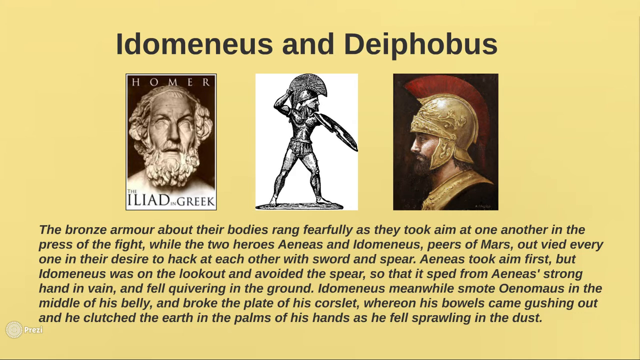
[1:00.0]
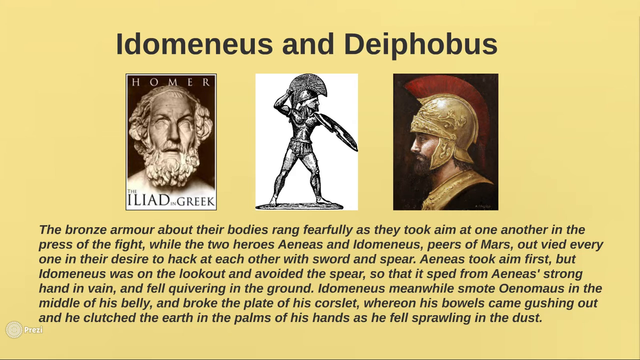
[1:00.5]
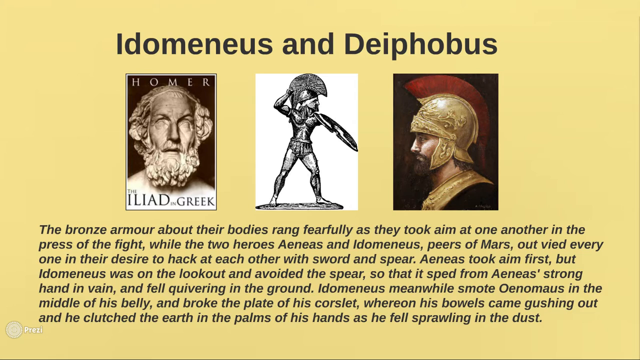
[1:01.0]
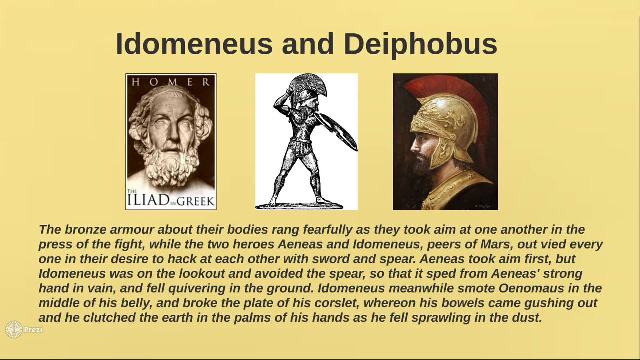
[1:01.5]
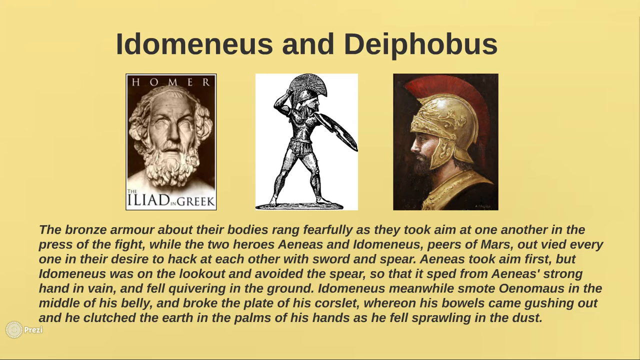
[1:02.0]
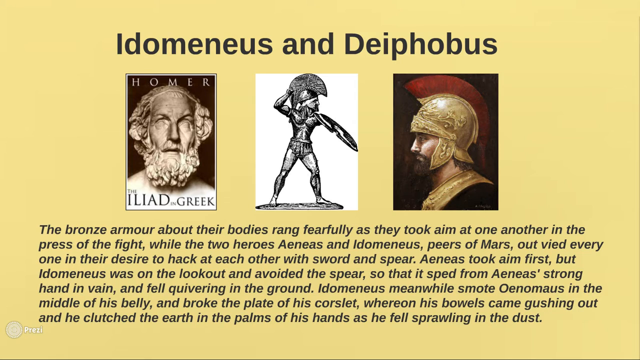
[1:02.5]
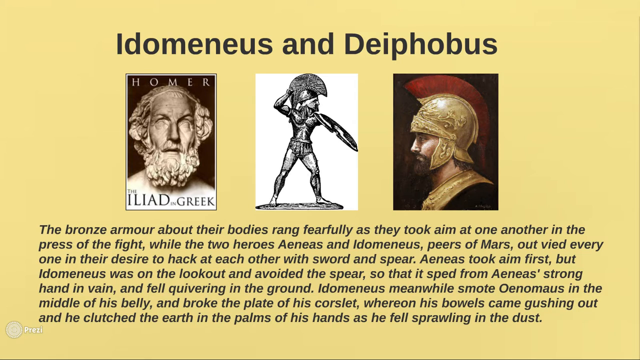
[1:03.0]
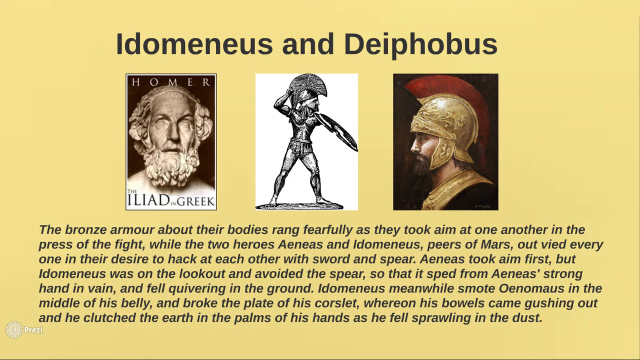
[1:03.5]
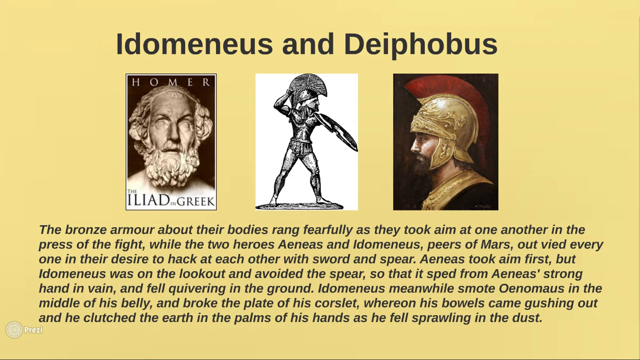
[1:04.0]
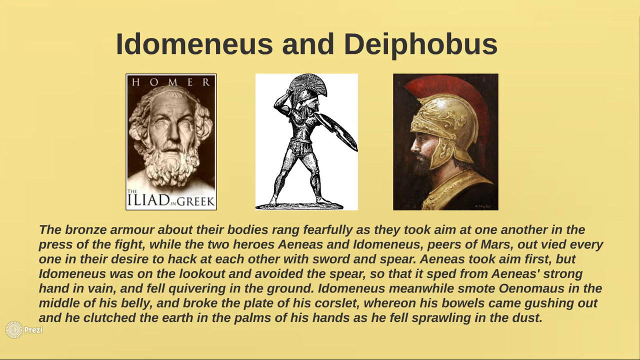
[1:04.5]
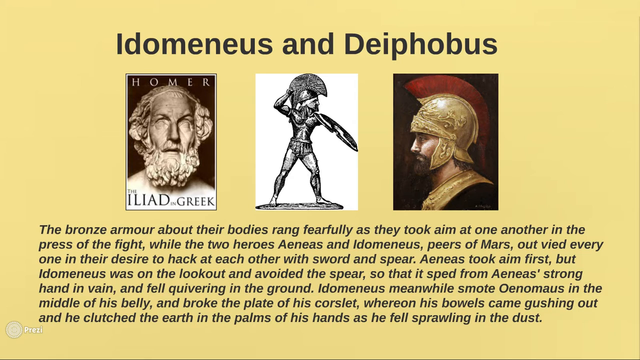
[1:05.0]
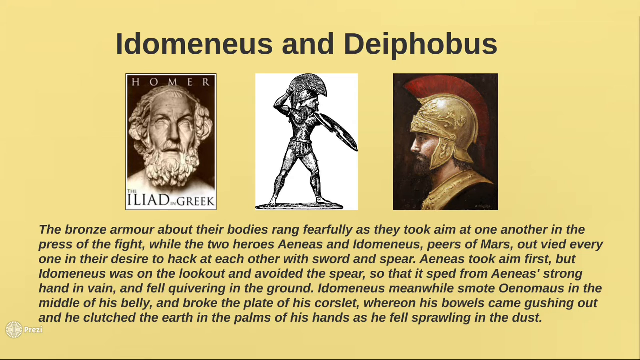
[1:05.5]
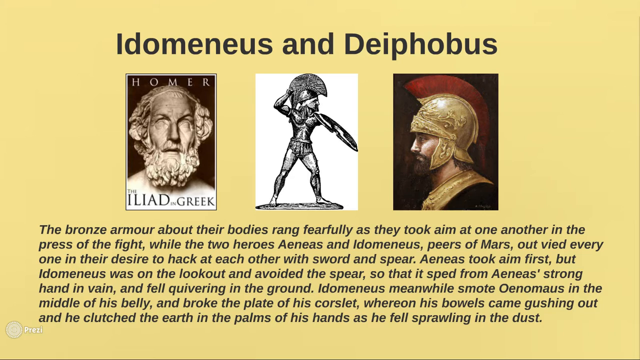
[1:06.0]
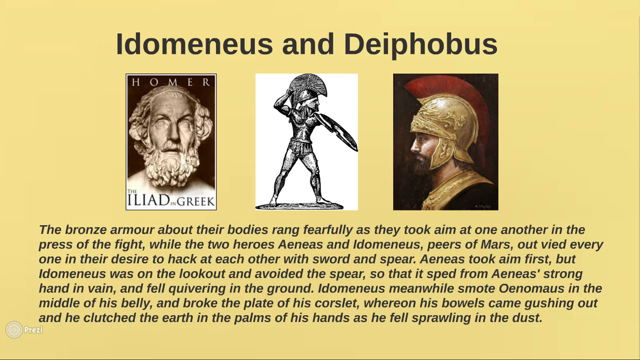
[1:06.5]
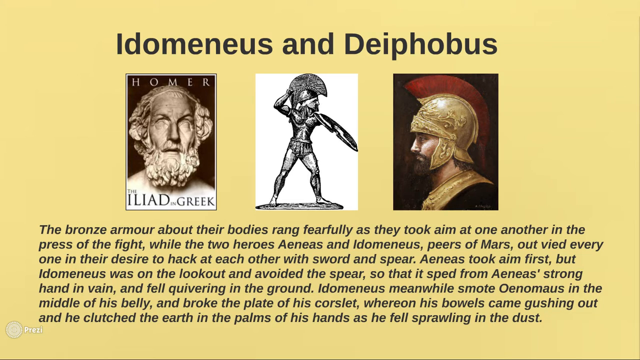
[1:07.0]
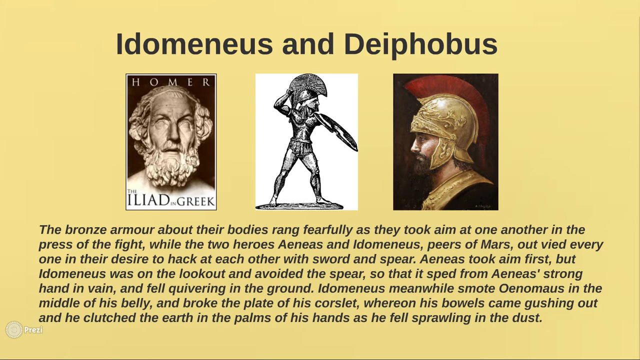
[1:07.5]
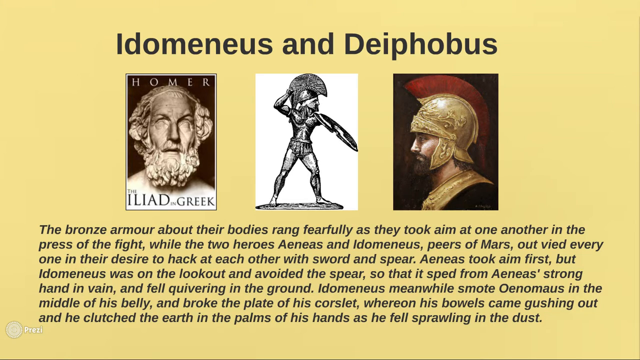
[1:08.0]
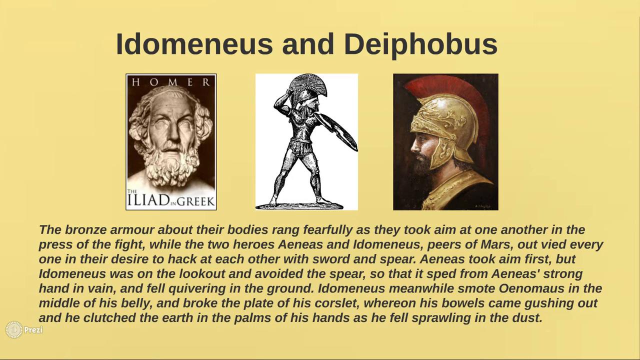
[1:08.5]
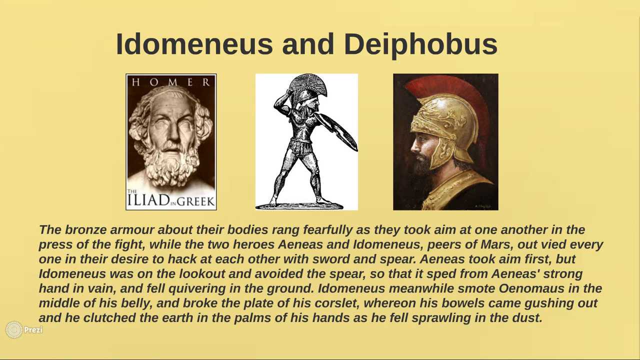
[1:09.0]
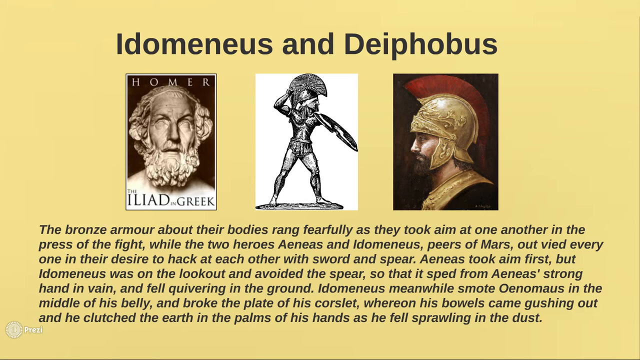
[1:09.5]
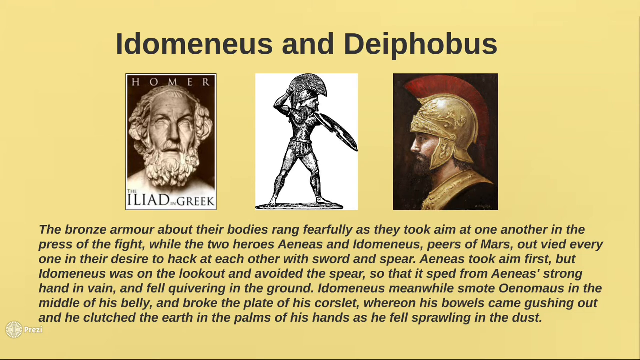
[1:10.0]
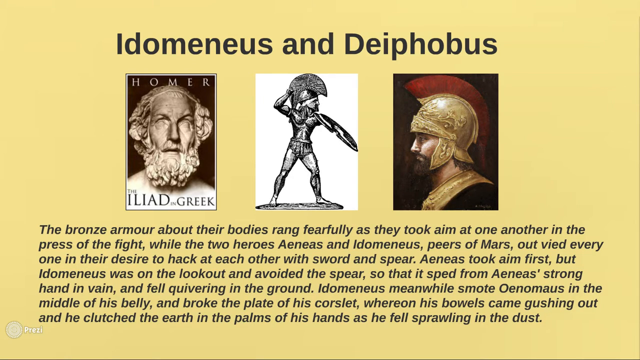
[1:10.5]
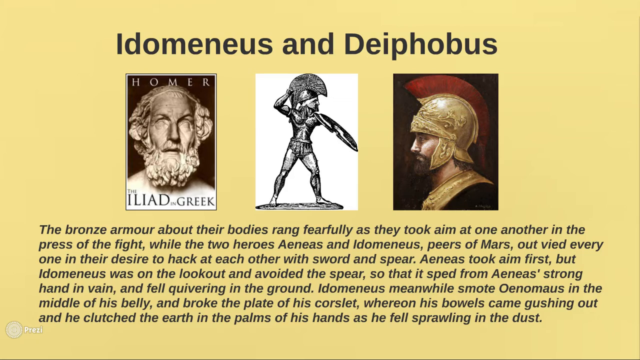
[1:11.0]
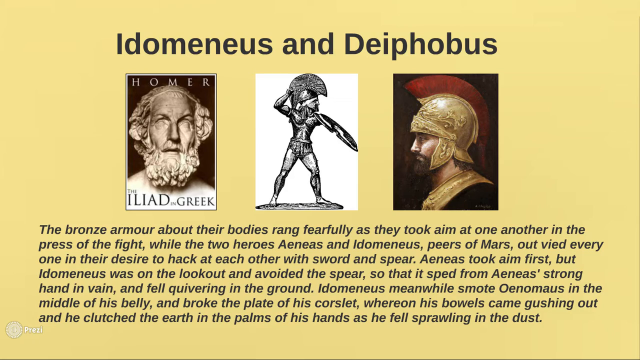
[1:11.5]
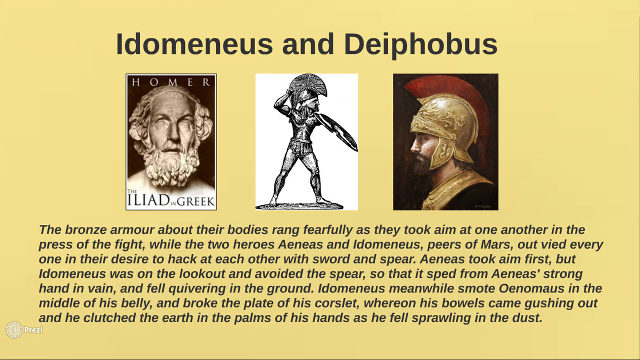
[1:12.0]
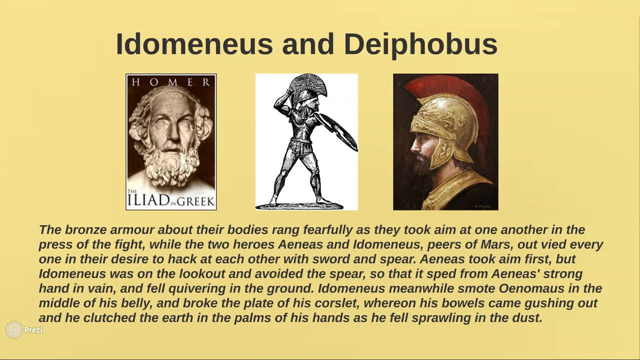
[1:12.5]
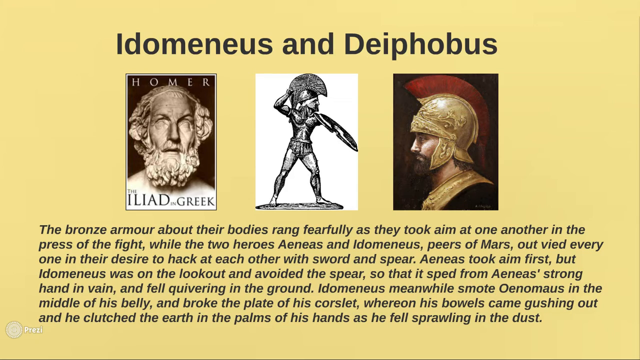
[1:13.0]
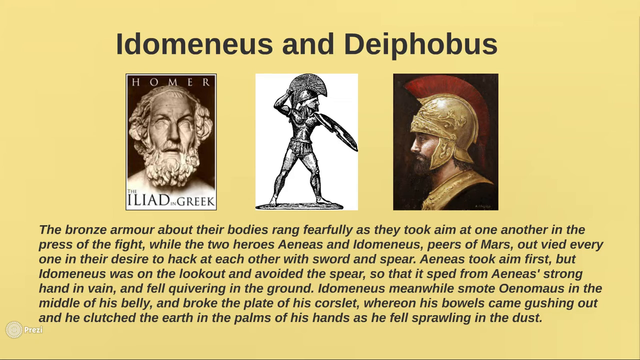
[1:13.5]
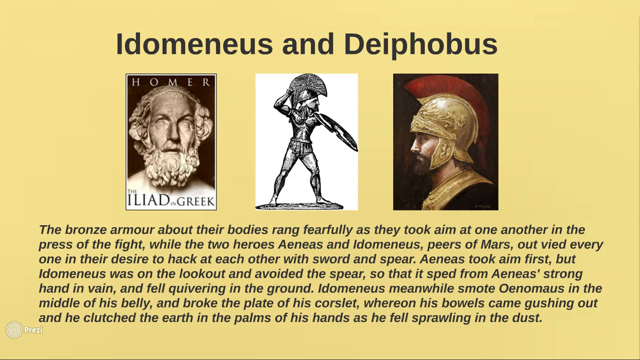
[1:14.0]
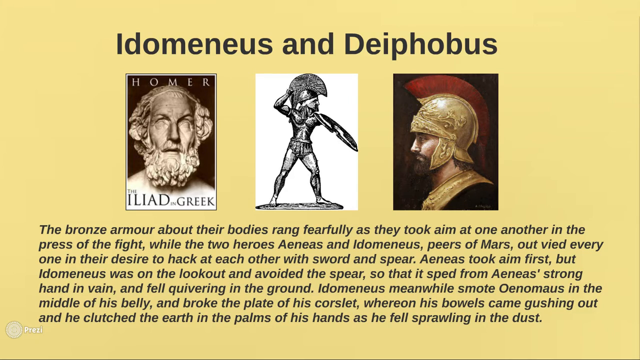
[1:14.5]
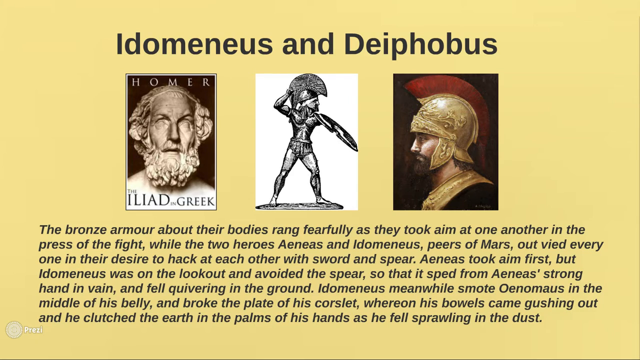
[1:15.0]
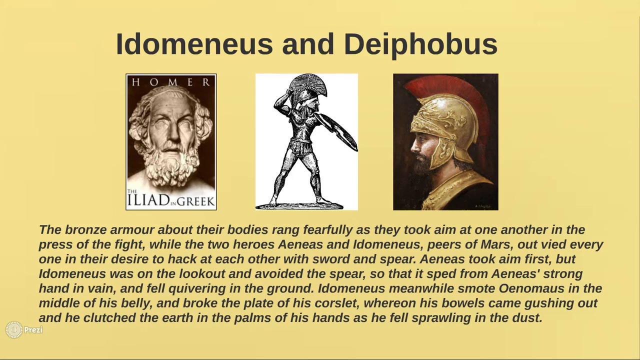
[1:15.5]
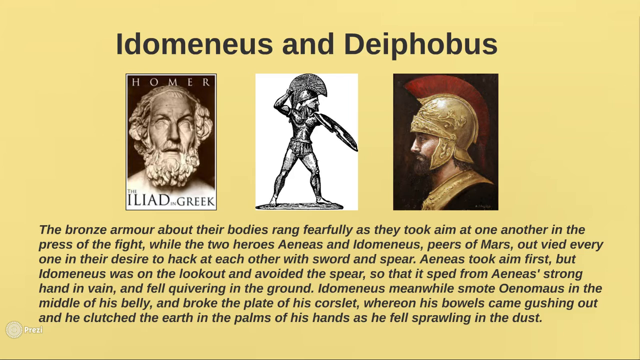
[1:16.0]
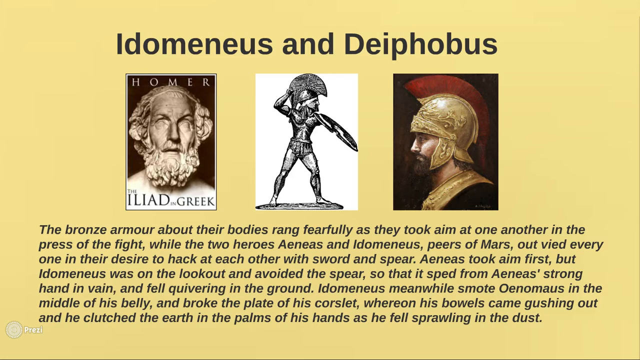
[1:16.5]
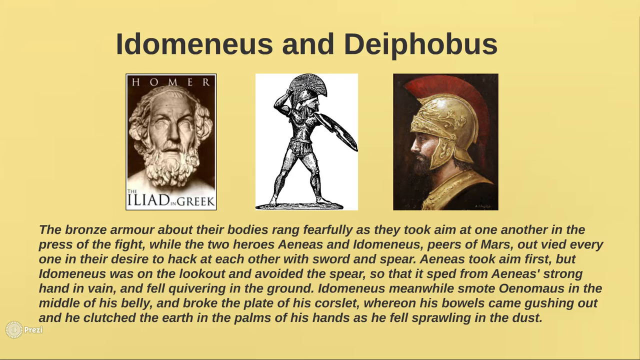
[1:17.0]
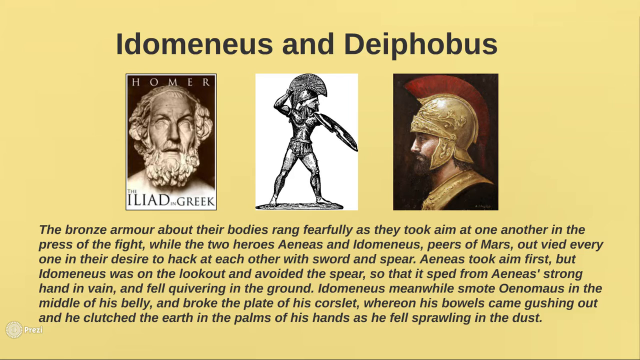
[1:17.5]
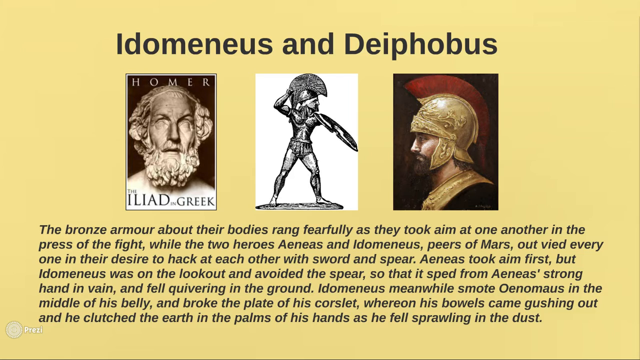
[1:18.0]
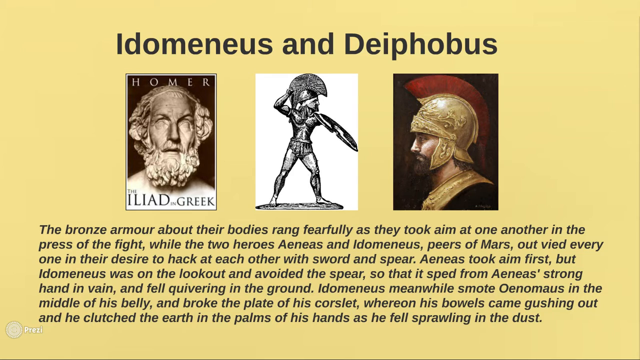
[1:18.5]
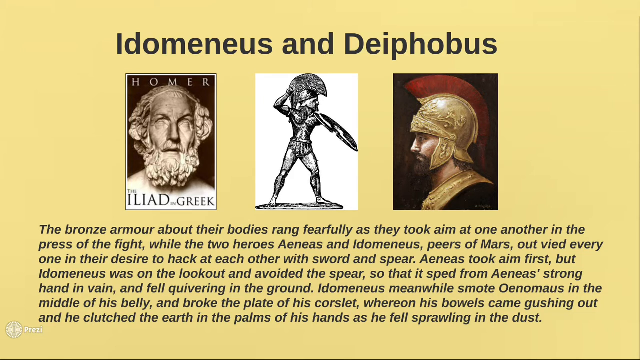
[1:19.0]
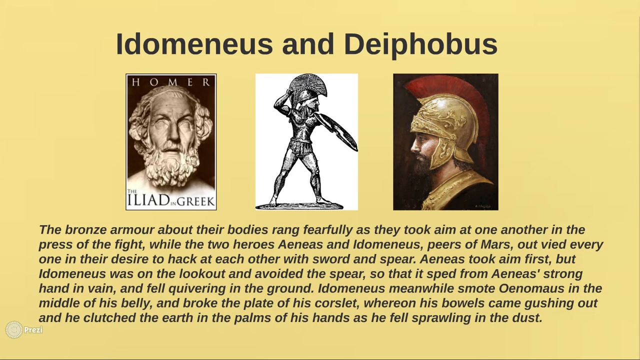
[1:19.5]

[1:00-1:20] A title at the top center reads "Indomenous and Diphobos", with three images beneath it. One says Homer and shows a very hairy, curly-haired man, like a white statue, with text saying "the Iliad of the Greek". The center image has a mostly white background and a warrior holding up a shield. The last image shows a warrior with a gold helmet topped by a red mohawk, a full-faced beard, and a gold neck plate; the rest of his shoulder and clothing appears dark. Under the three pictures is written information that seems to give more detail about them. The view stays on this screen, with the title and three images, for quite a while.